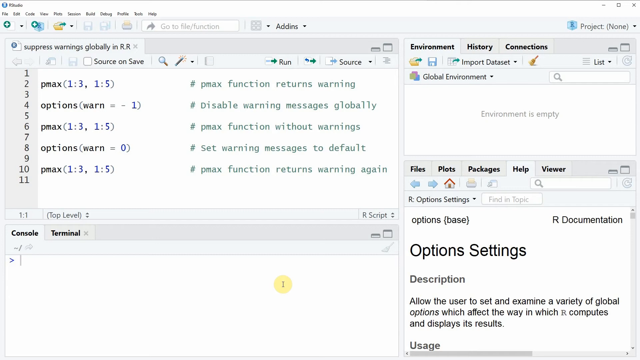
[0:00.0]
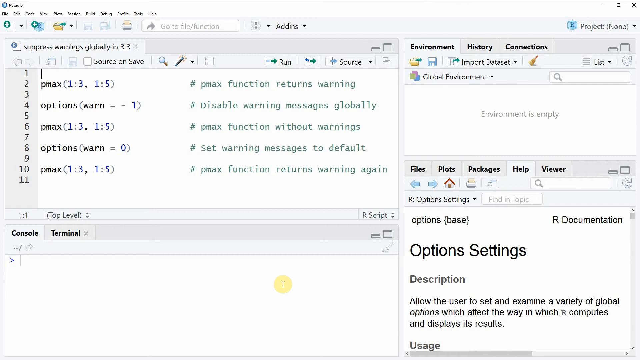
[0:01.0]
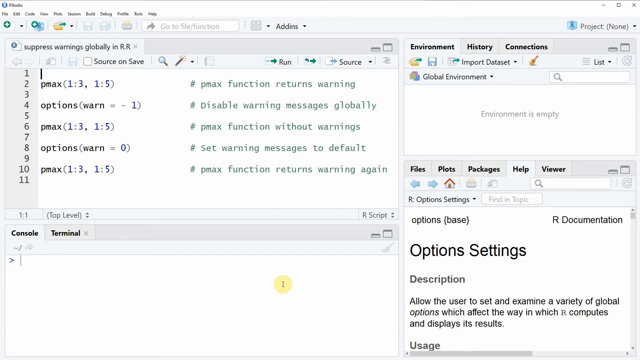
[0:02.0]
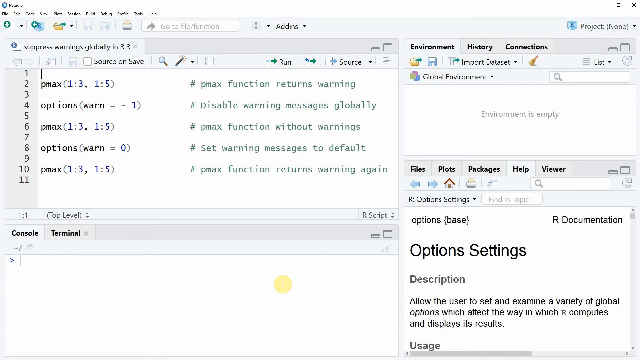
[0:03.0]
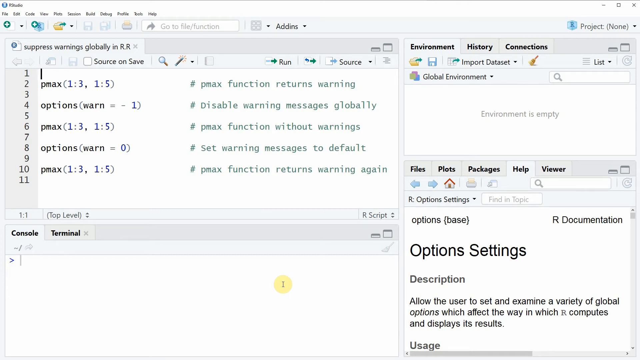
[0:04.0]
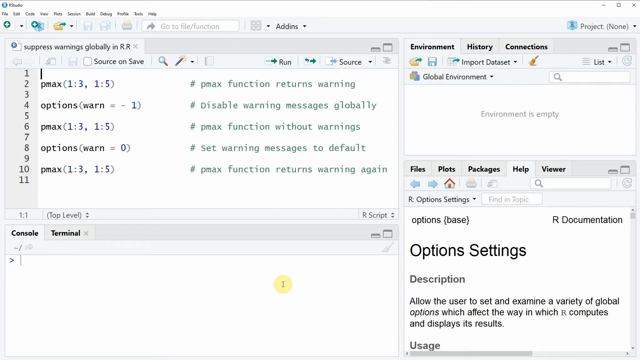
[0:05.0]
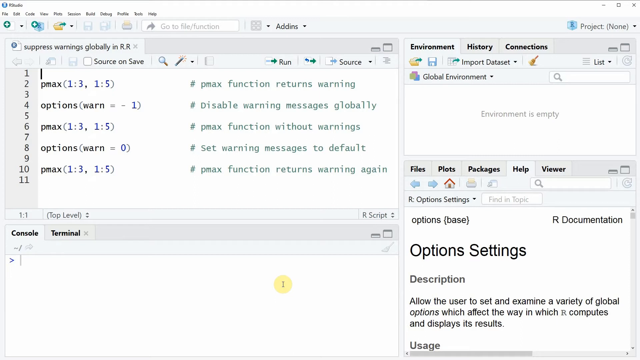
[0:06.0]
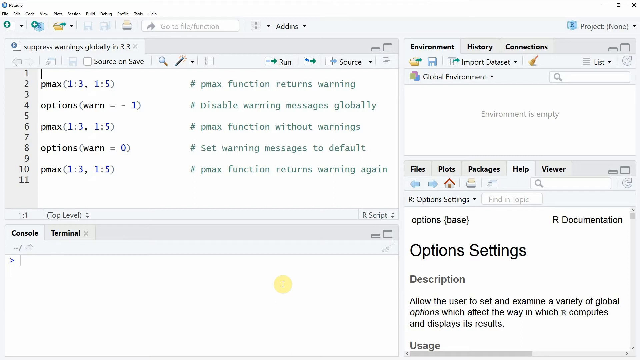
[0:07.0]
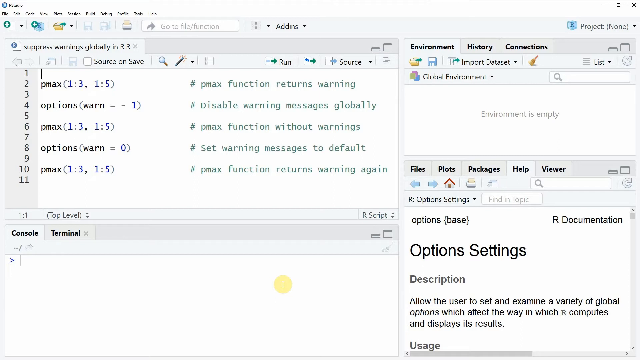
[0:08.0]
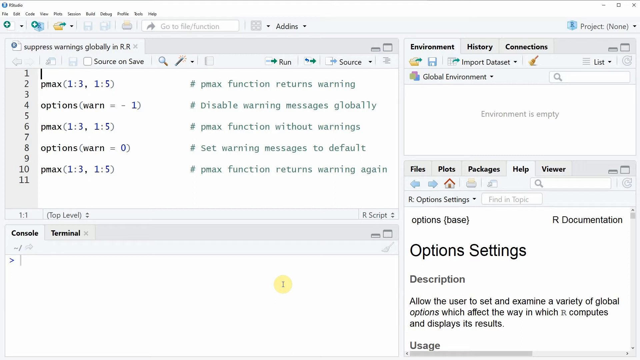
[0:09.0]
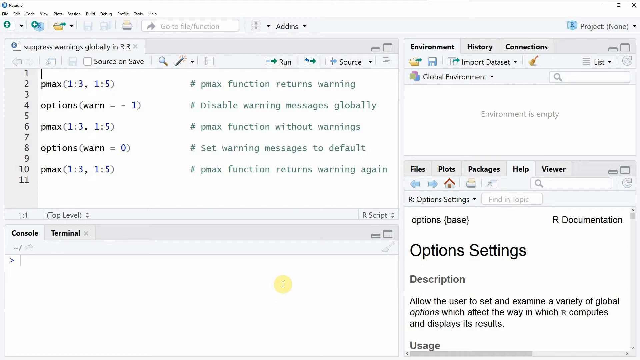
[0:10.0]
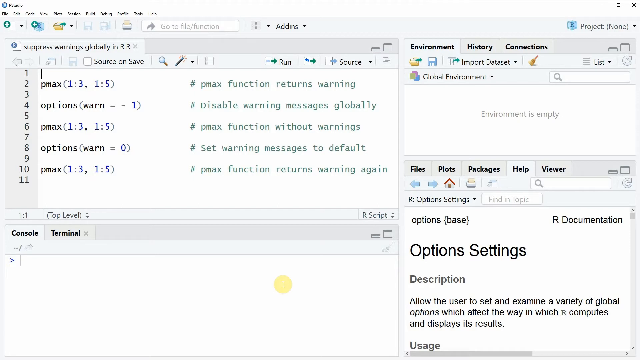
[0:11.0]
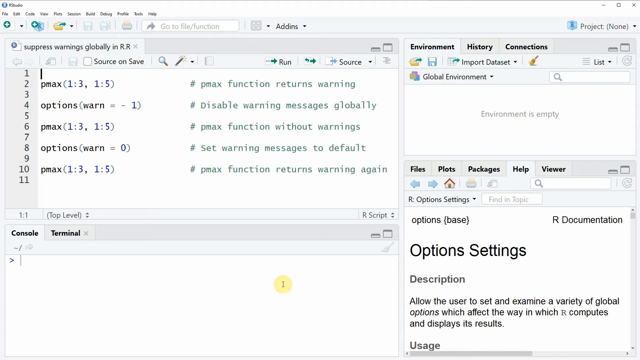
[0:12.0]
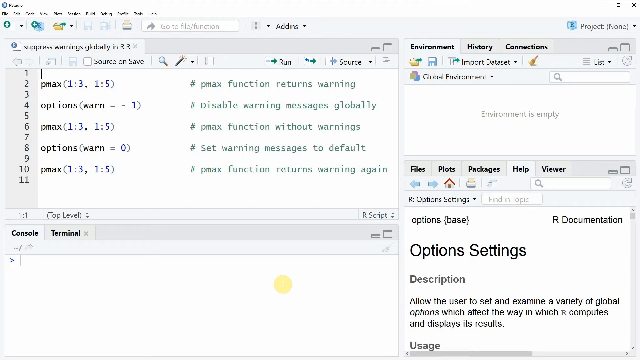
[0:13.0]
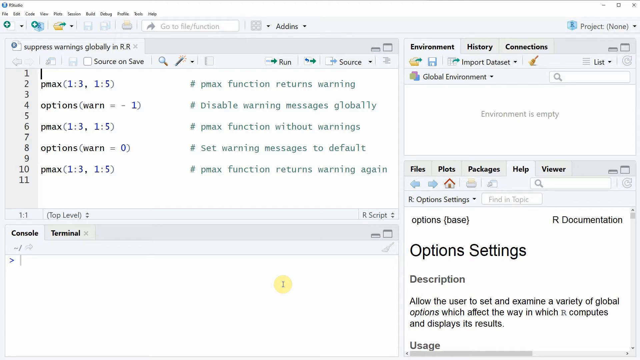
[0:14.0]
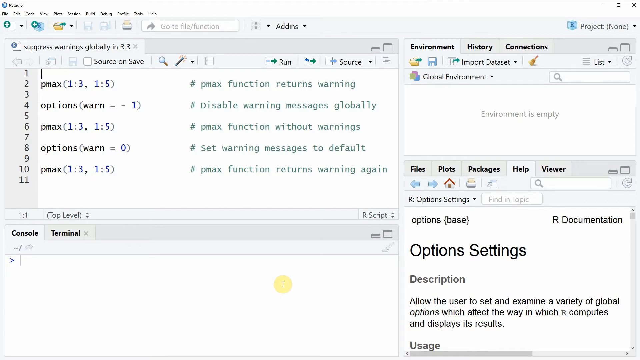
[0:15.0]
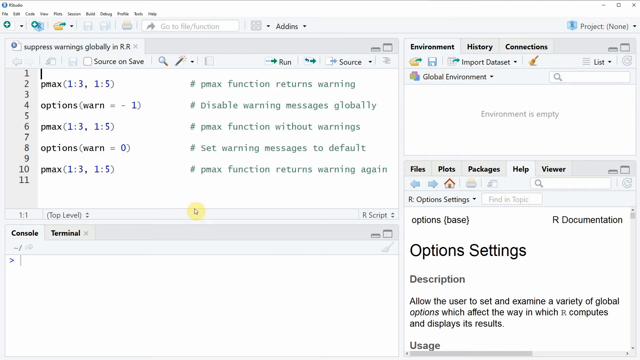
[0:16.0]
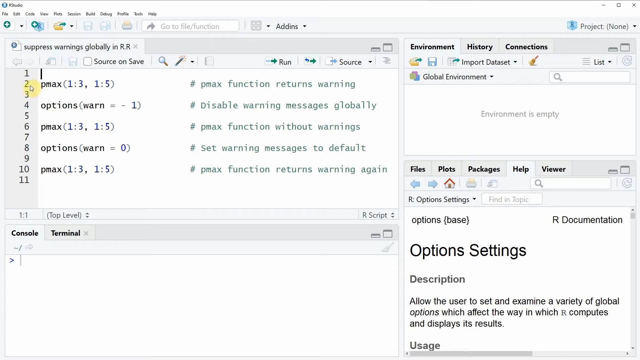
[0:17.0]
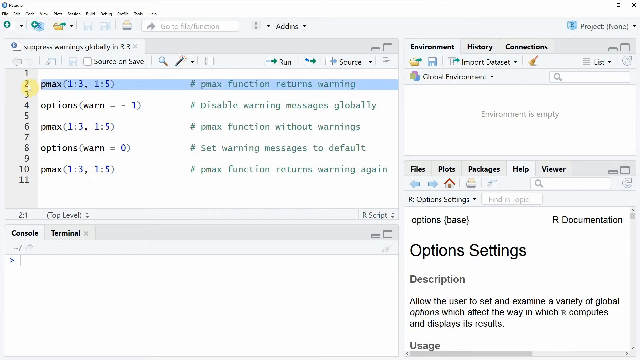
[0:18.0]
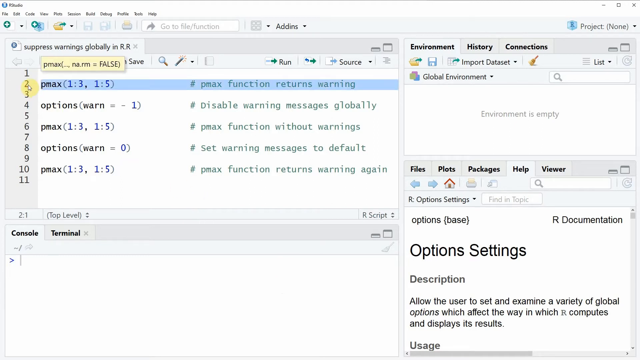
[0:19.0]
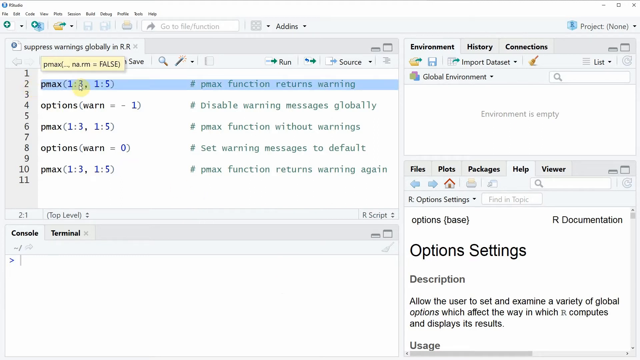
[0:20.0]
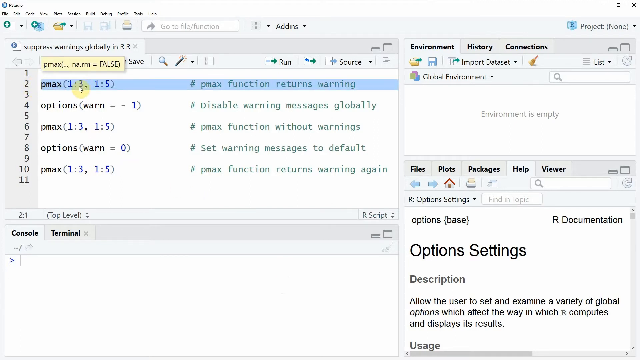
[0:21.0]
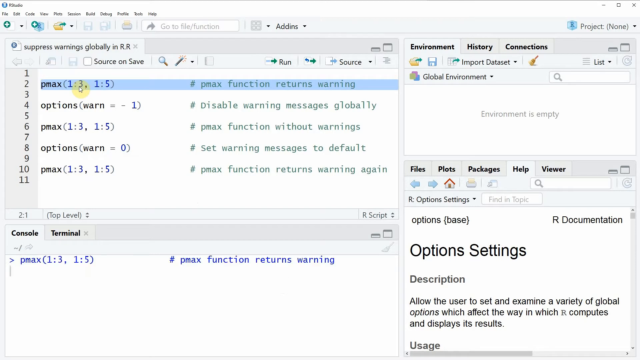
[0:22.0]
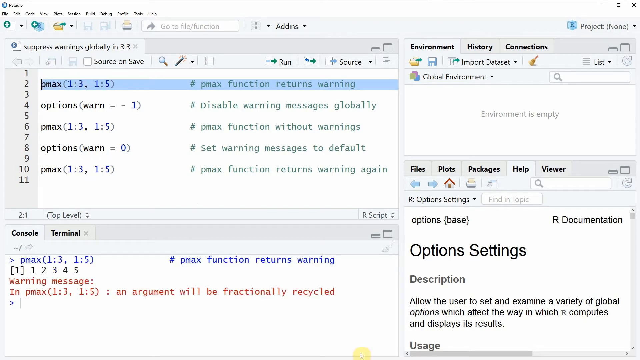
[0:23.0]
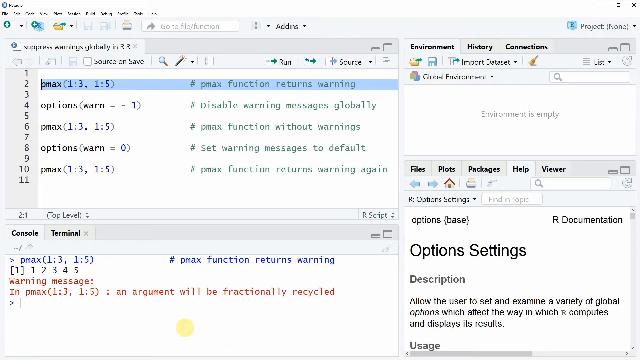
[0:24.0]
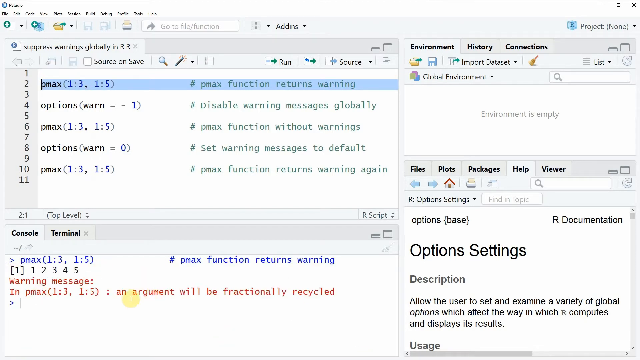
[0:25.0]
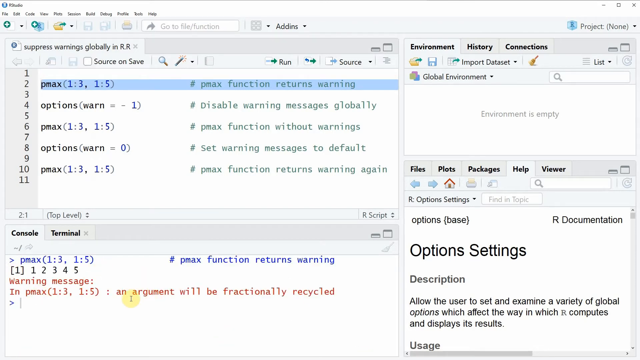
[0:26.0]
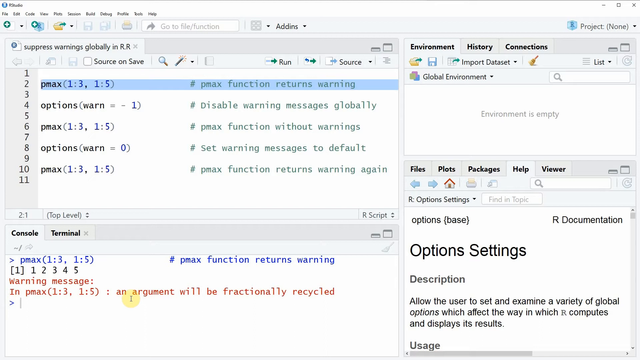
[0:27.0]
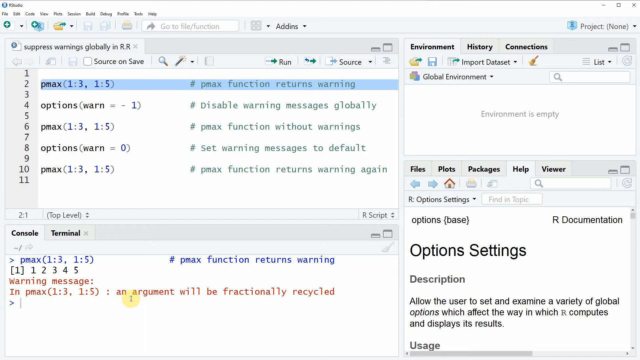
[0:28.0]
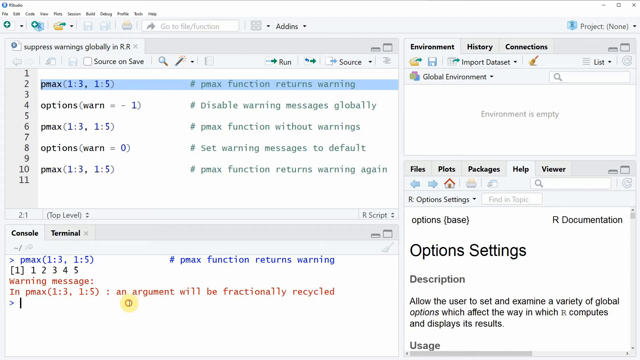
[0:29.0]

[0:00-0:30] The video shows a page of code on a coding platform that cannot be identified. A person inserts the pmax function, with an entry of pmax and brackets containing 1, 3, 1, 5. The person selects the pmax function to run the code. After clicking, the pmax result is shown as false. The pmax then runs and gives the values 1, 2, 3, 4 and 5. The output also shows a warning message for pmax(1:3, 1:5) with the text "argument will be functionally recycled".